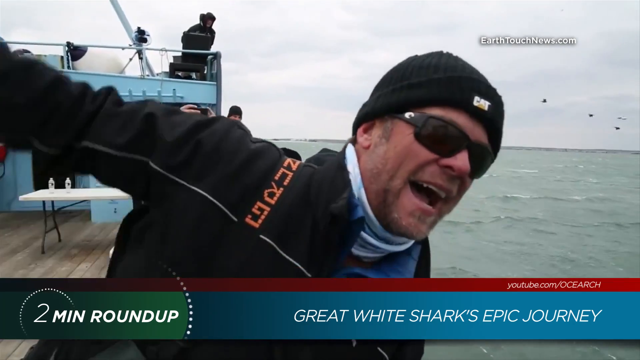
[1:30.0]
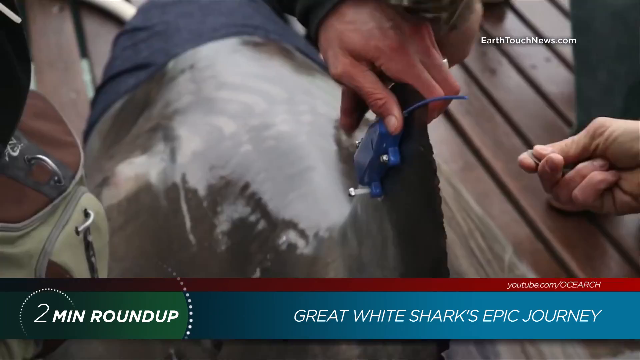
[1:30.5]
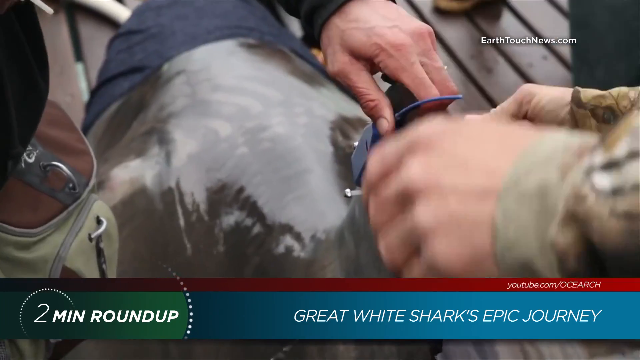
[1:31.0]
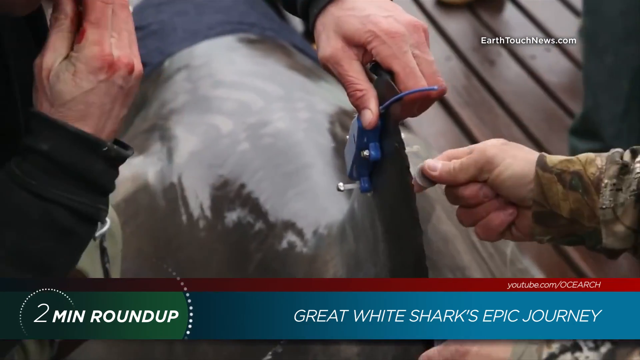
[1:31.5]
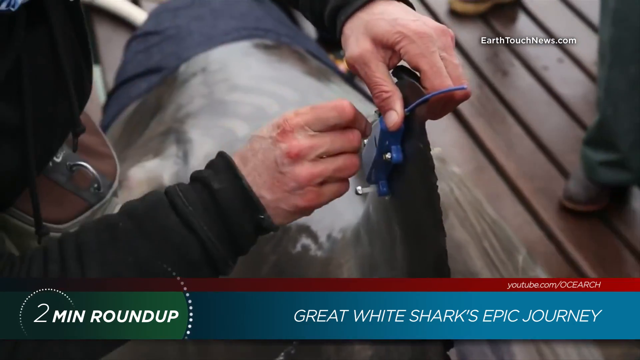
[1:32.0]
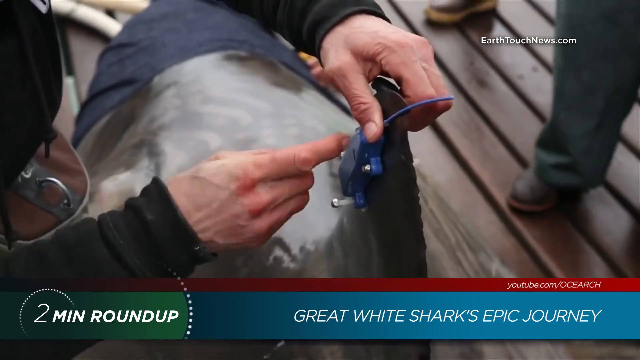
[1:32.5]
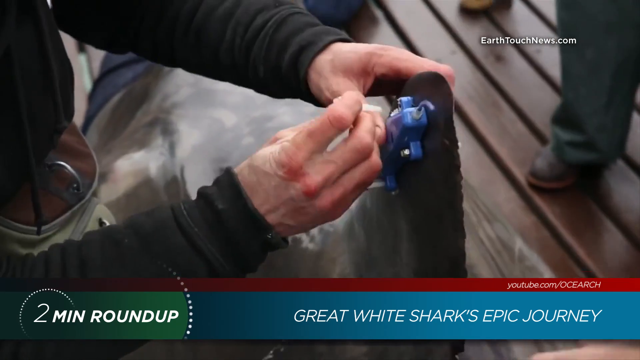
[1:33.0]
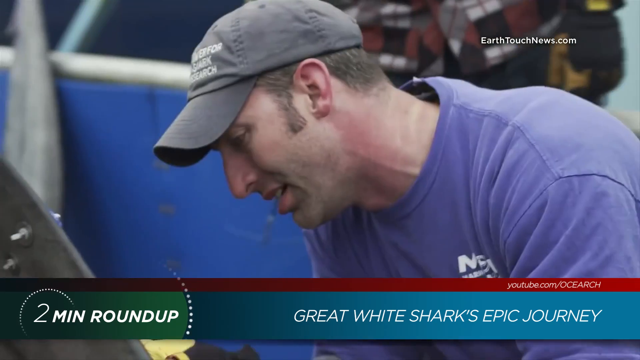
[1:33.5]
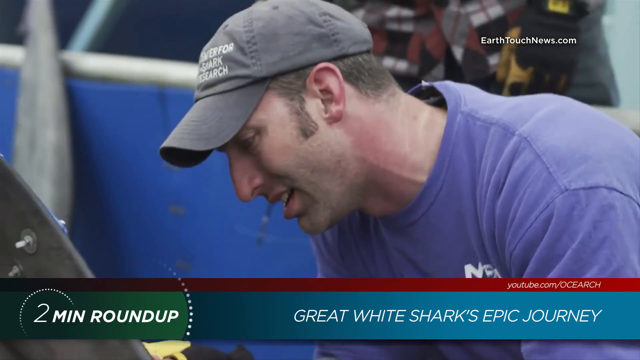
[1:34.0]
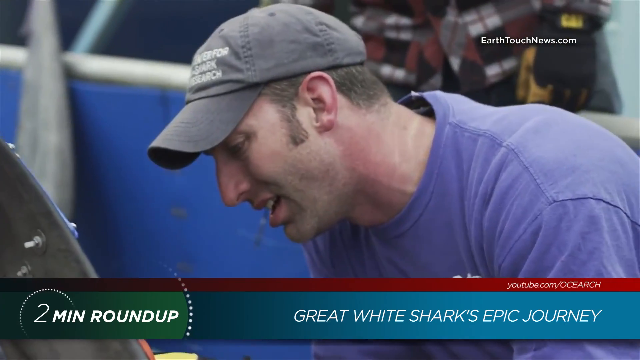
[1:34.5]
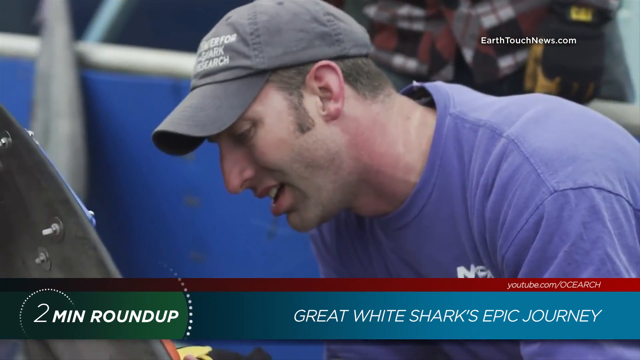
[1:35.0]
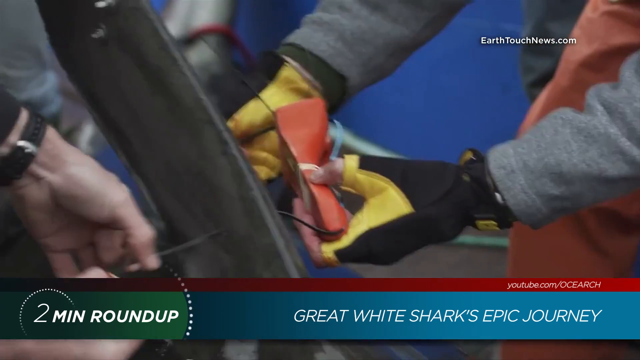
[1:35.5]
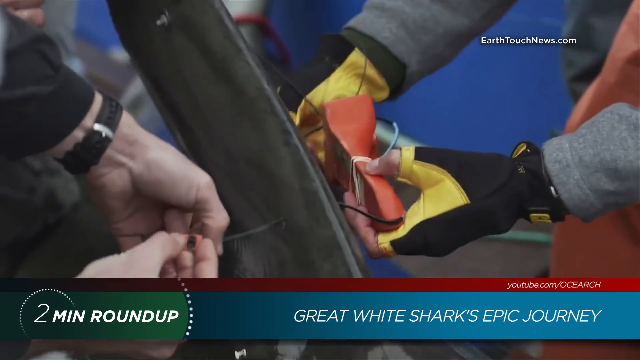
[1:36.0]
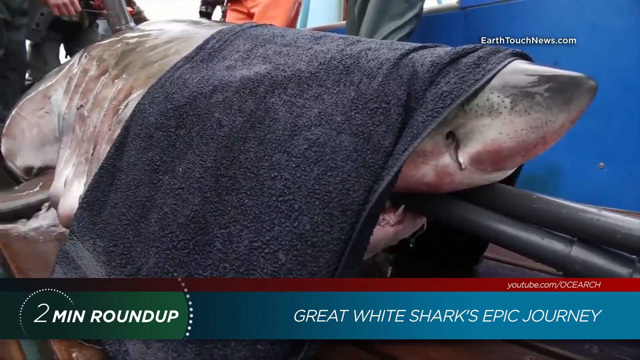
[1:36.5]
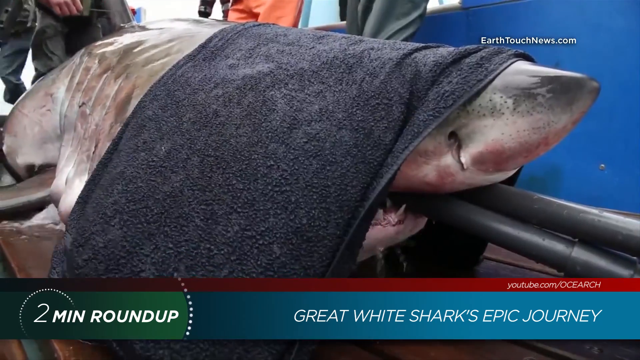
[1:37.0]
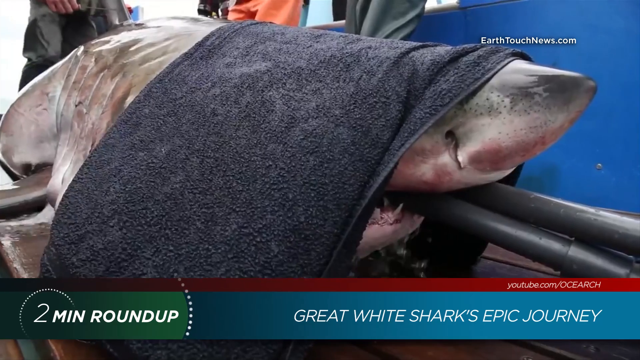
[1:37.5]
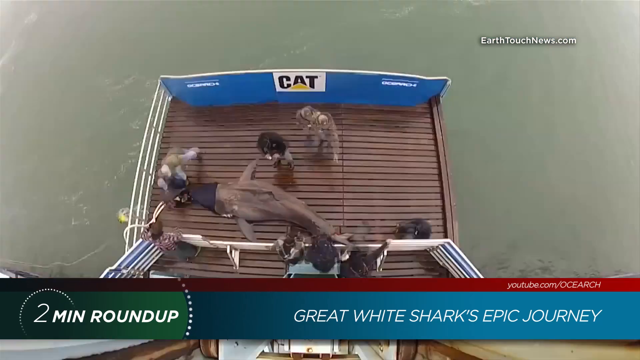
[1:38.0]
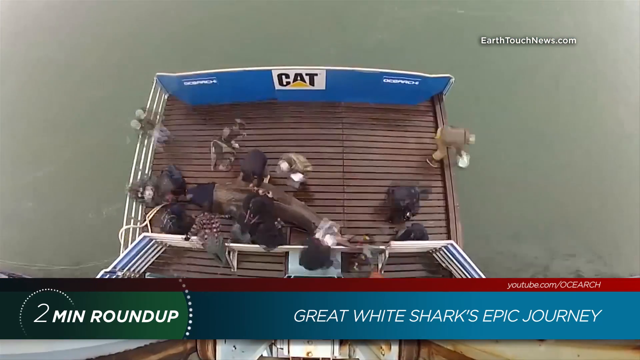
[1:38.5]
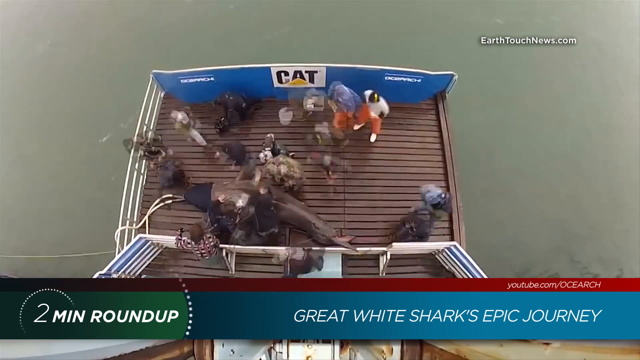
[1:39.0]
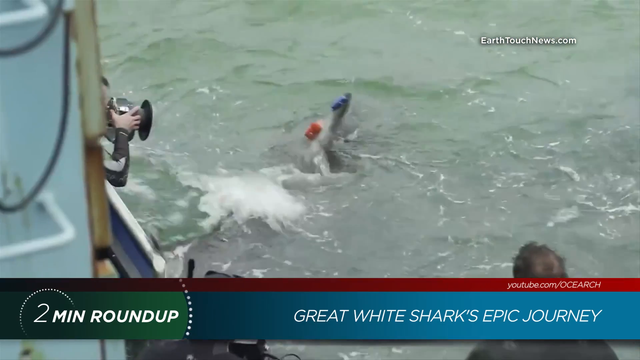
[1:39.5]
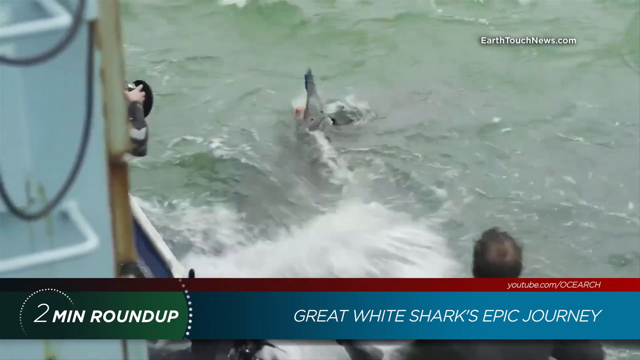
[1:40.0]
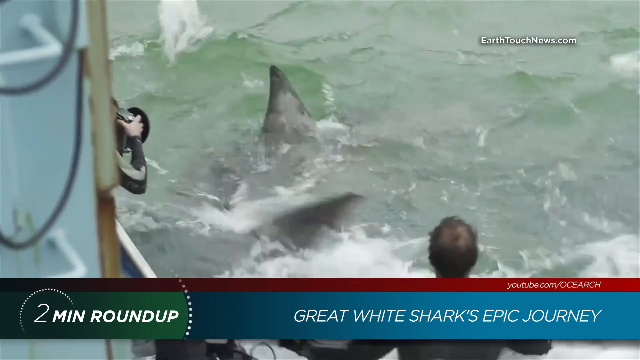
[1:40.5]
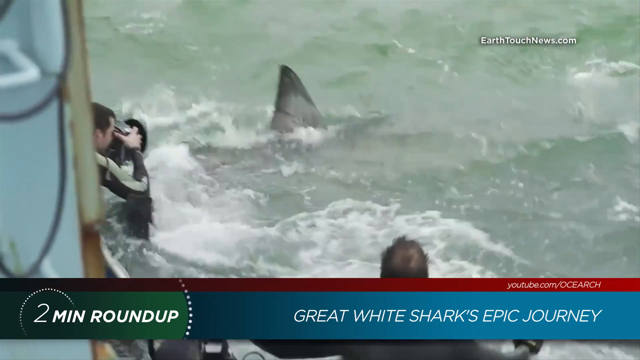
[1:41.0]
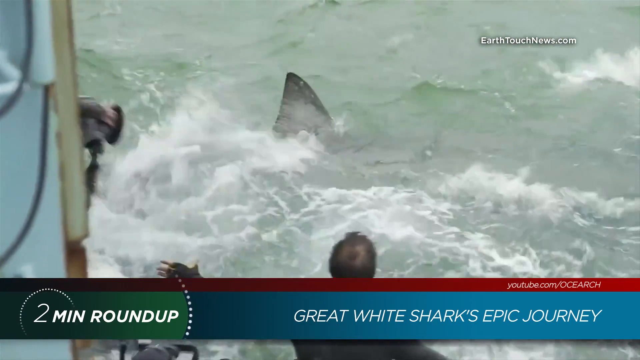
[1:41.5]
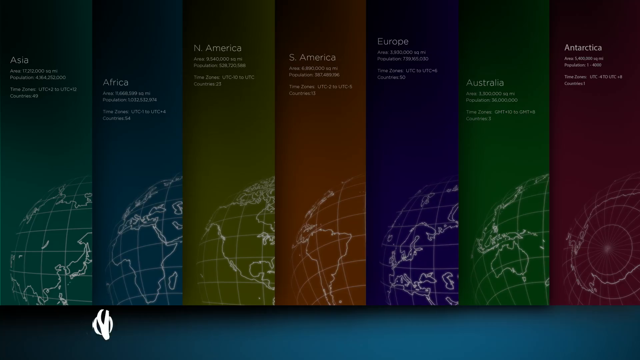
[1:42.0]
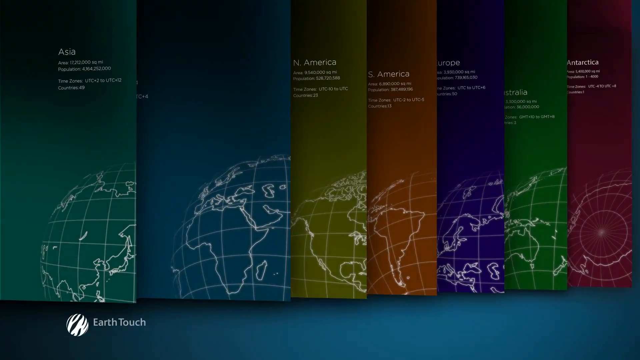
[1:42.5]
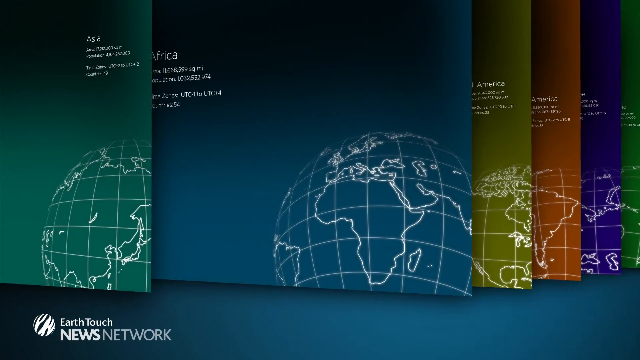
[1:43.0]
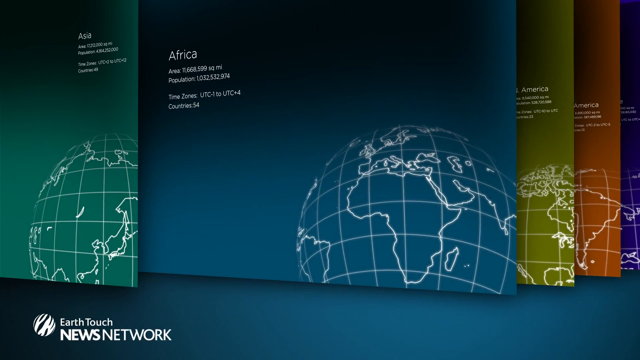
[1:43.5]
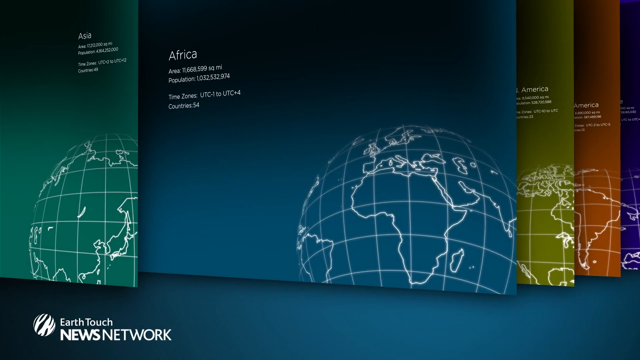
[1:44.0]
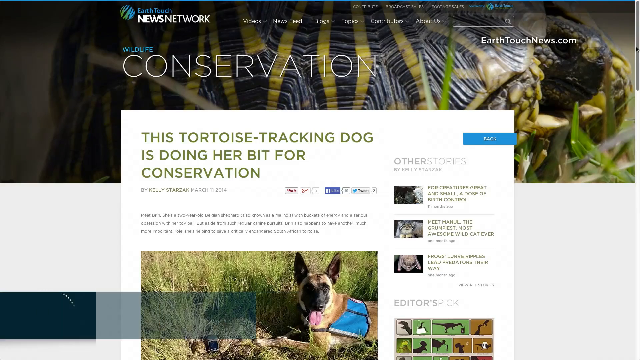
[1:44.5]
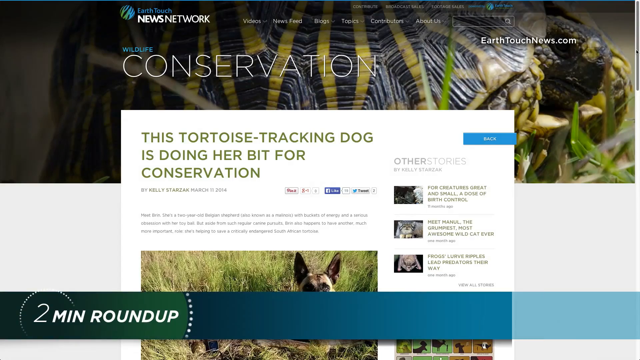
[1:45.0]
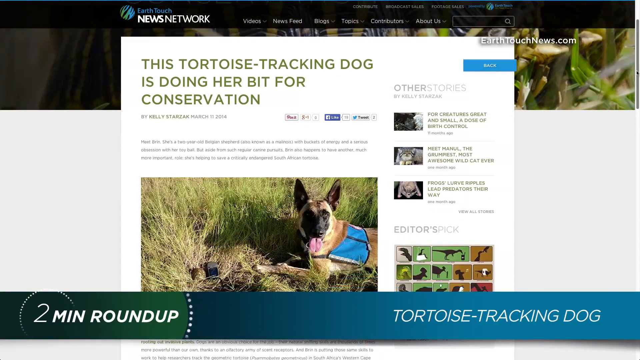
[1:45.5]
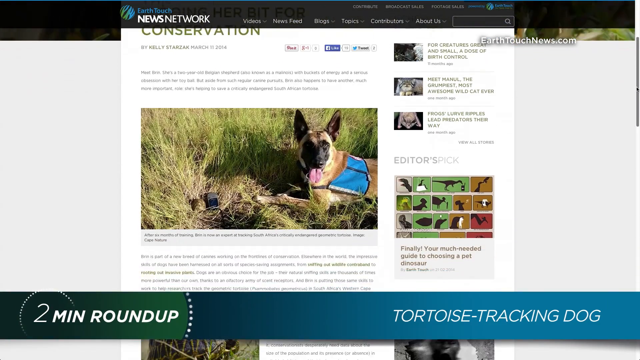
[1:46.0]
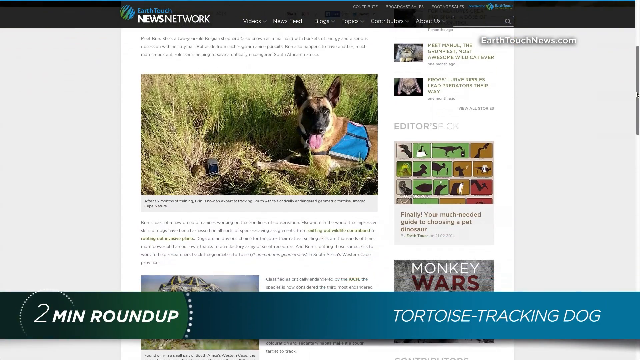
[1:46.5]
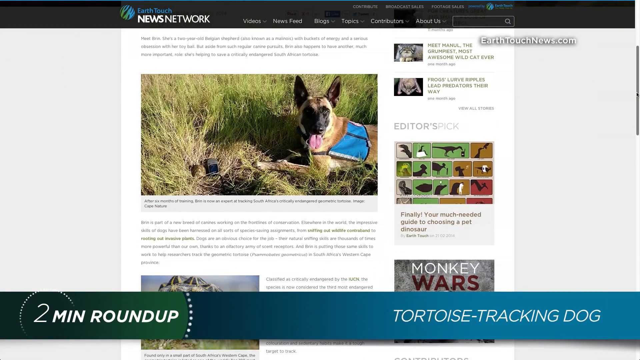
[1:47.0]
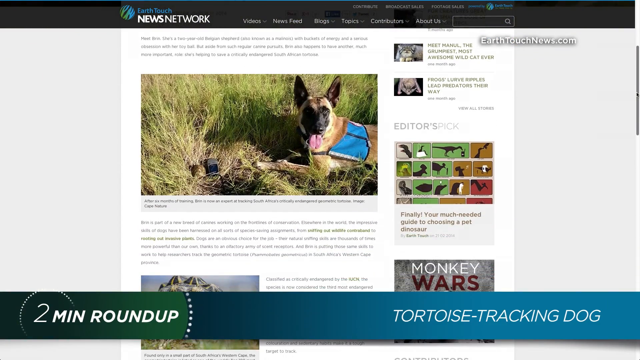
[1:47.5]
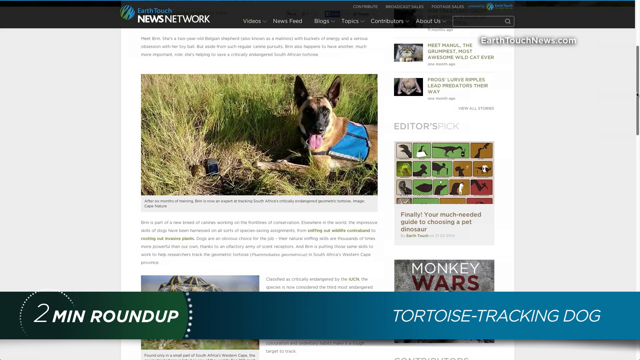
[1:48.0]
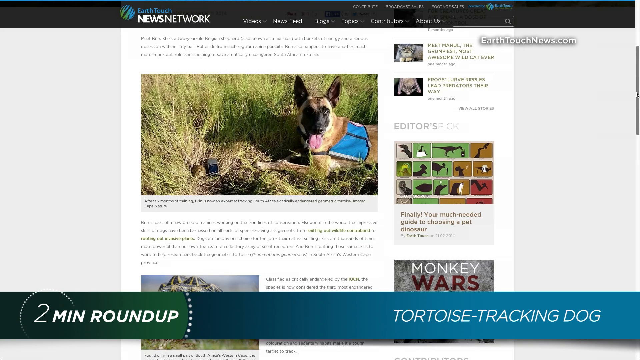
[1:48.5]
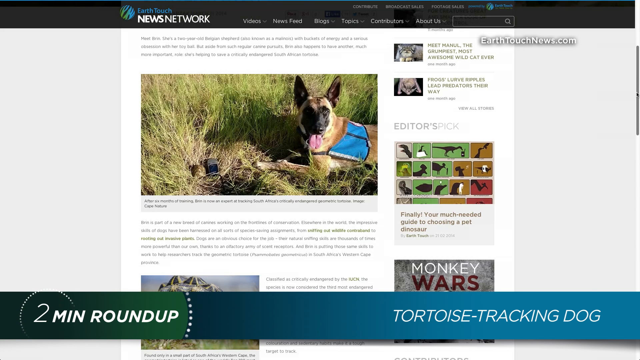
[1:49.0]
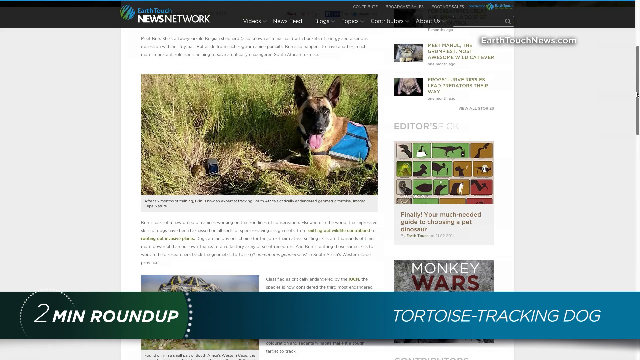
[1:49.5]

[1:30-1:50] A man is on a boat at the ocean, with birds in the background. He wears a black hat, black glasses and a black top, and his mouth is open as he waves. Next, people appear to be working on something together; a man wears a hat and a purple shirt. The view returns to them working with their hands. A shark is shown with a gray blanket over its eyes and head. A time-lapse follows of a group of people all working together on a little dock area, possibly of that boat. Then sharks are seen moving around in the ocean as someone records them from the boat. A chart of color-coded countries follows, each color-coded element with a globe. Next, a page labeled "Conservation" shows the headline "This tortoise-tracking dog is doing her bit for conservation"; the page is scrolled, showing a brown dog wearing a blue vest.